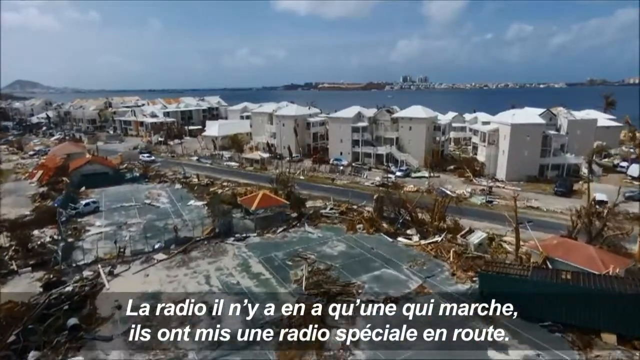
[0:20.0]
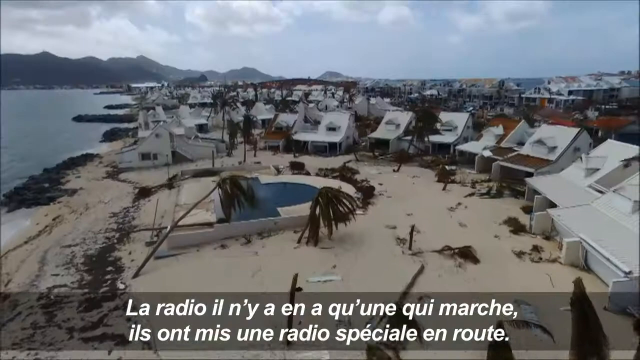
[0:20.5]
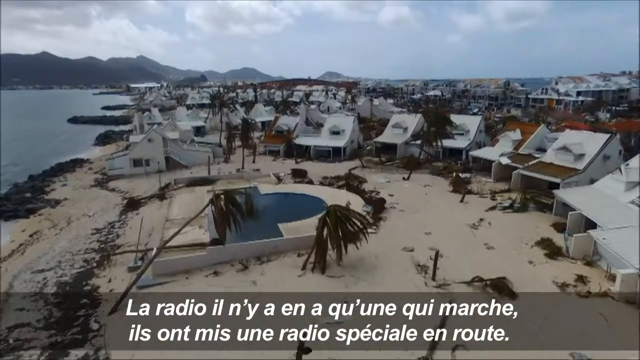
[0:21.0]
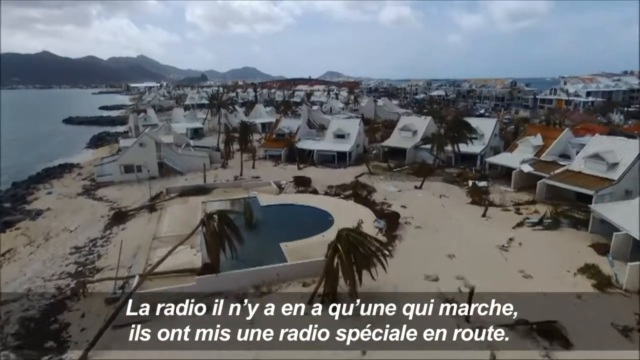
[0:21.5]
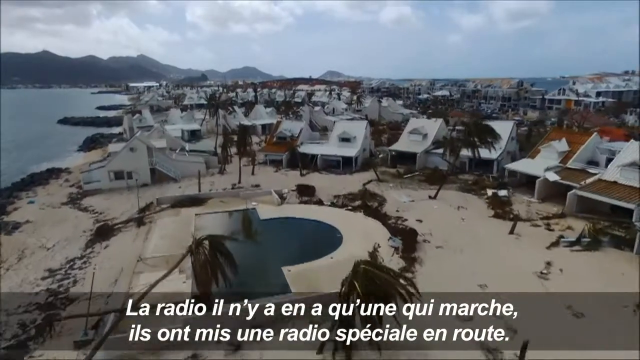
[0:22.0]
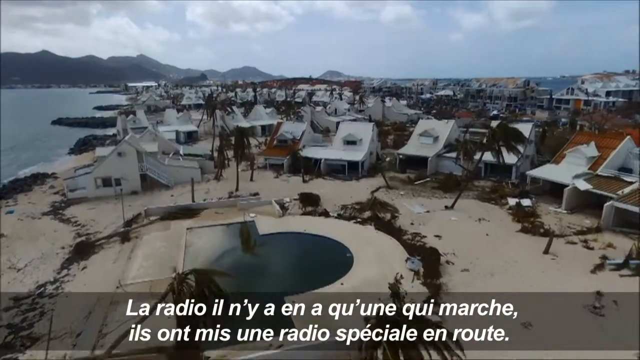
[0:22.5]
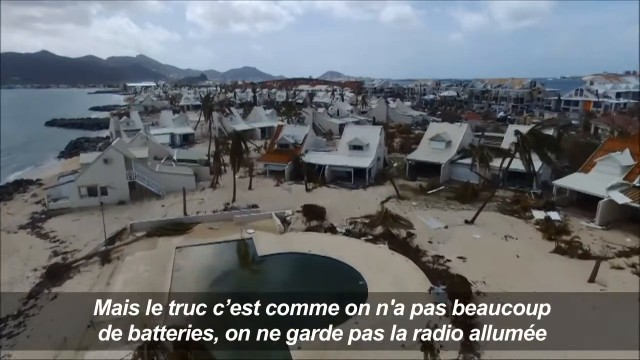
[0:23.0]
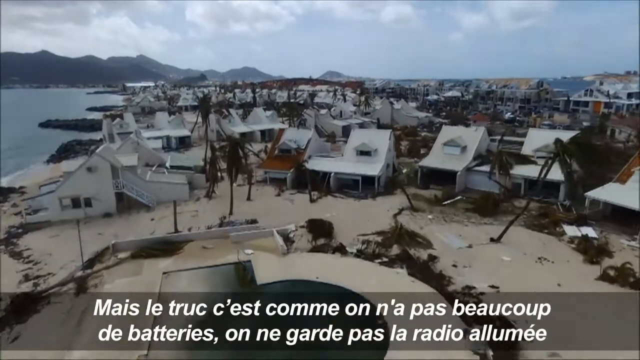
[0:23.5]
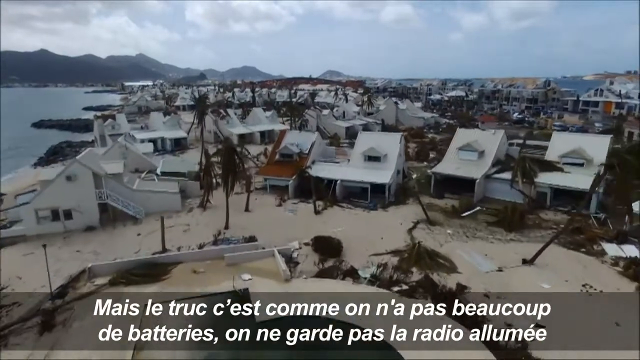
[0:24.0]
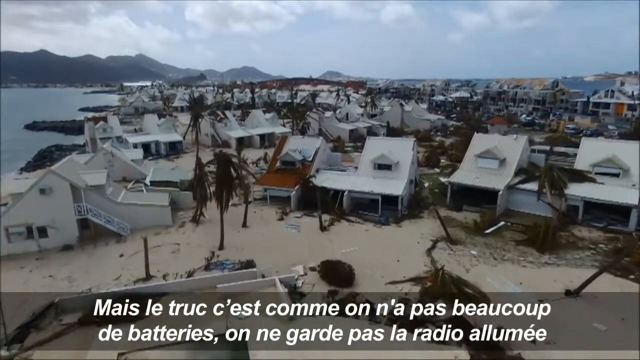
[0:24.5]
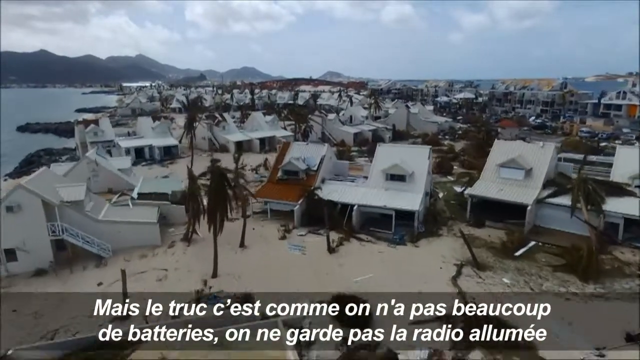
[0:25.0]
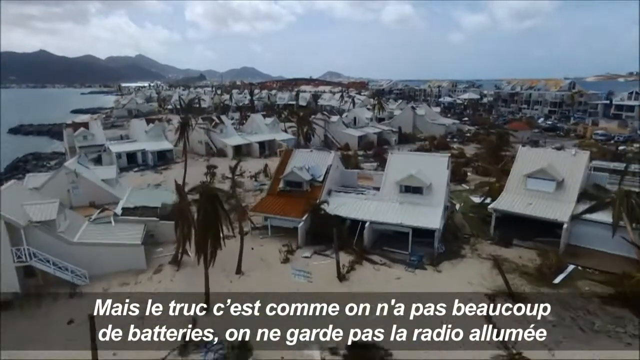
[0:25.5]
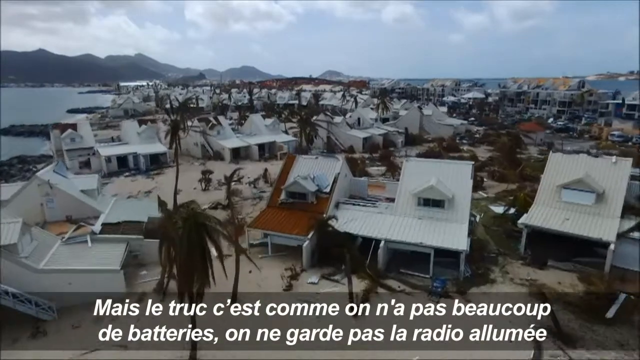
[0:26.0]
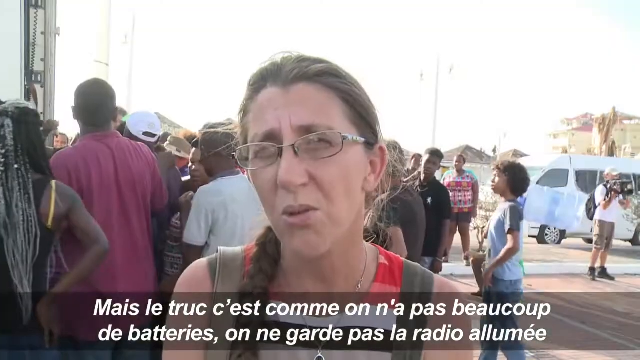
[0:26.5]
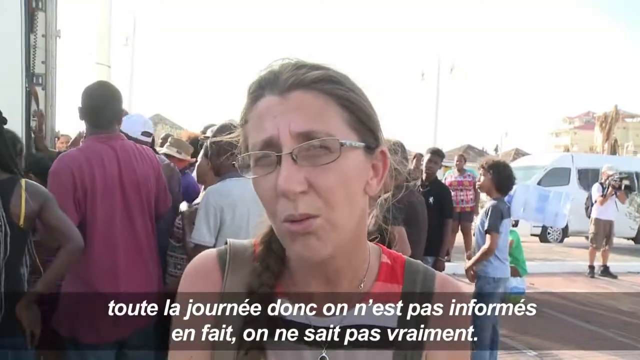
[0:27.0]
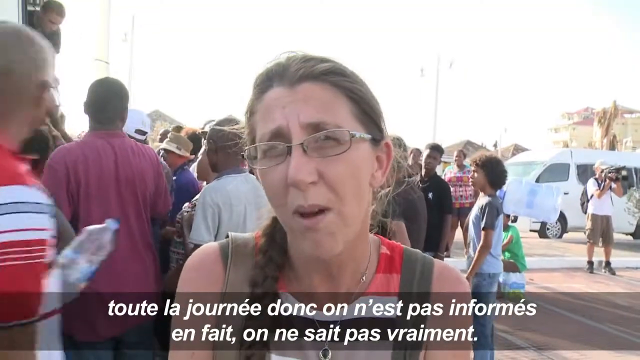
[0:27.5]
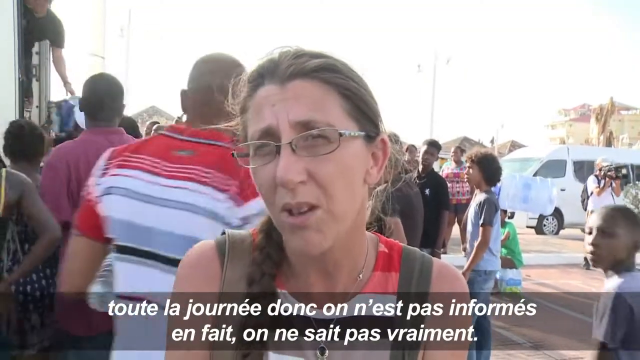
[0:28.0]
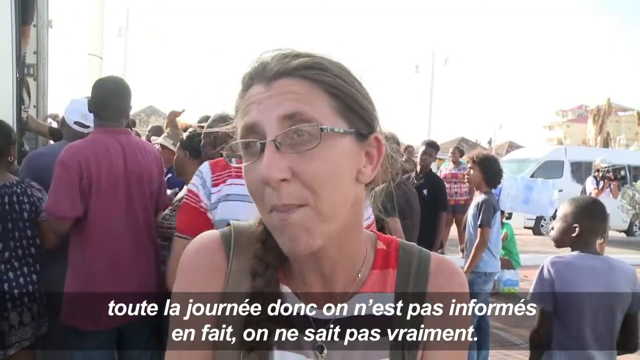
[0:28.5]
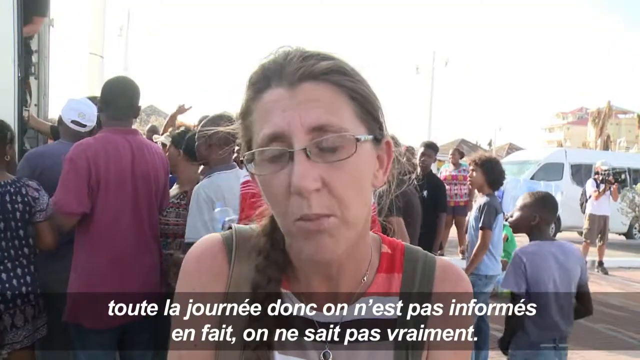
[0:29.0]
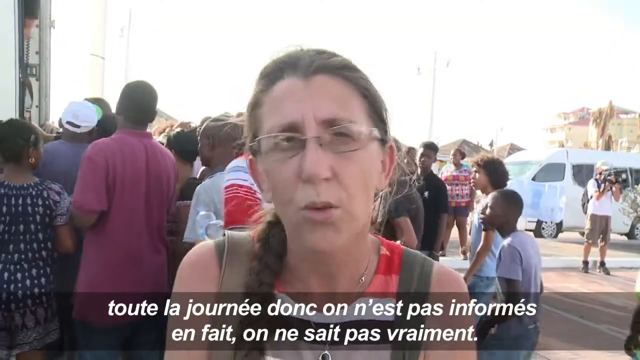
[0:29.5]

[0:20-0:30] A different view of the town shows the ocean on the left side of the screen. Many of the homes have serious roof damage and appear to have been affected by a hurricane or major storm. All of the visible palm trees are either broken or sitting at a 45-degree angle, as if battered by very strong winds. No people are visible on the beach or around any of the homes, and from the aerial view the area almost looks abandoned. The woman is shown once again at the truck, where water is being passed out to the large crowd that has gathered. Her facial expressions seem desperate as she shakes her head and raises her eyebrows.